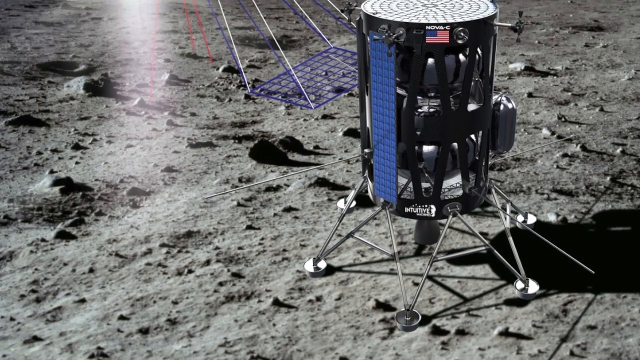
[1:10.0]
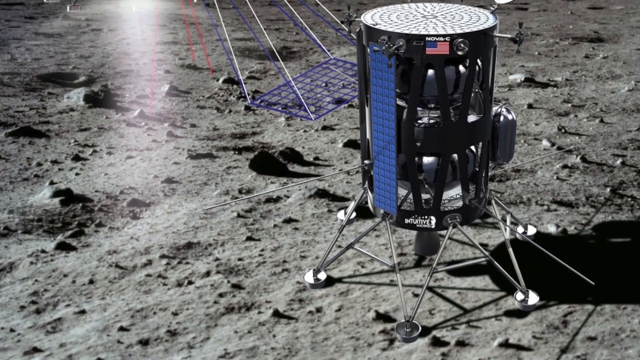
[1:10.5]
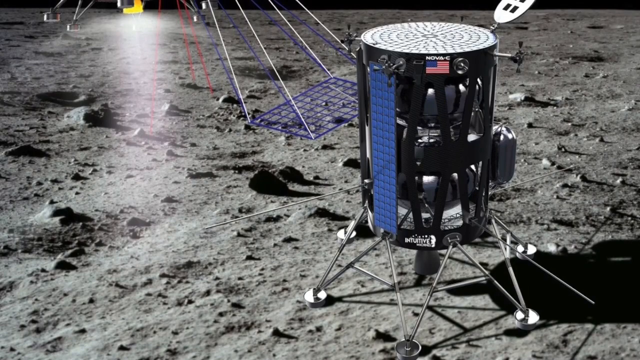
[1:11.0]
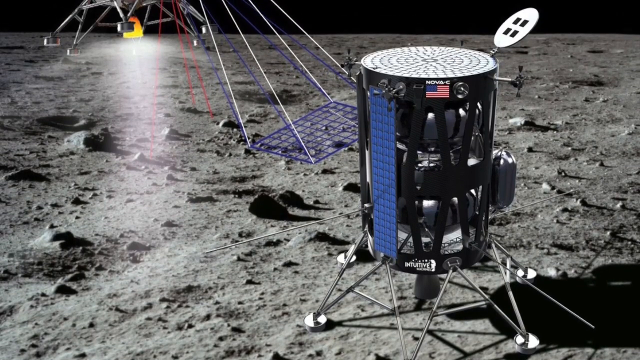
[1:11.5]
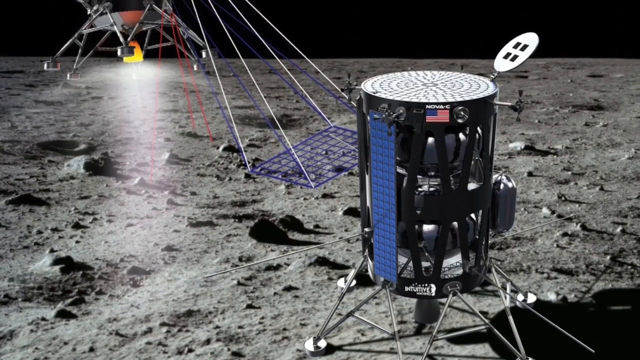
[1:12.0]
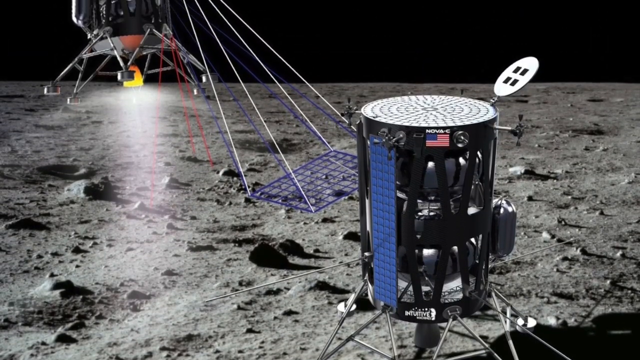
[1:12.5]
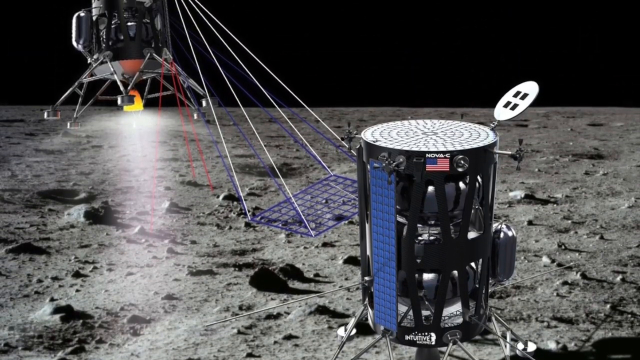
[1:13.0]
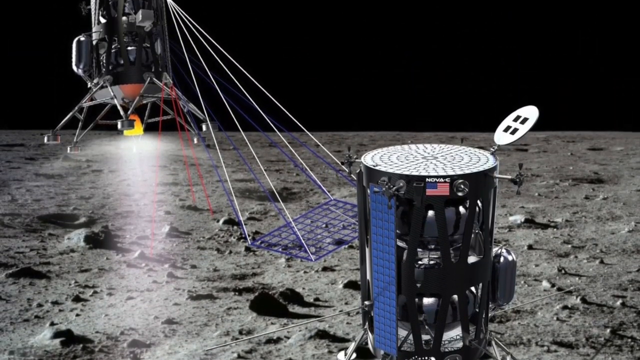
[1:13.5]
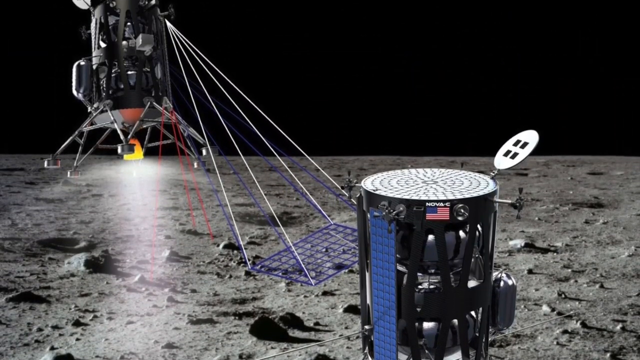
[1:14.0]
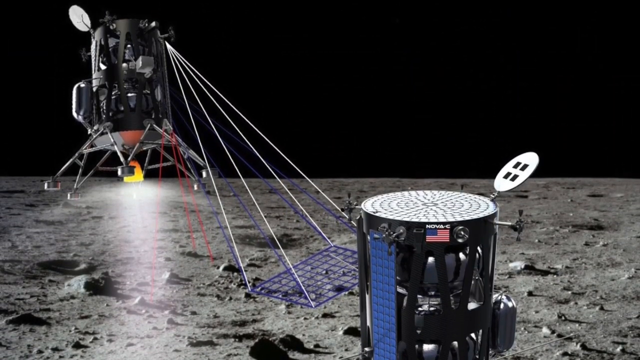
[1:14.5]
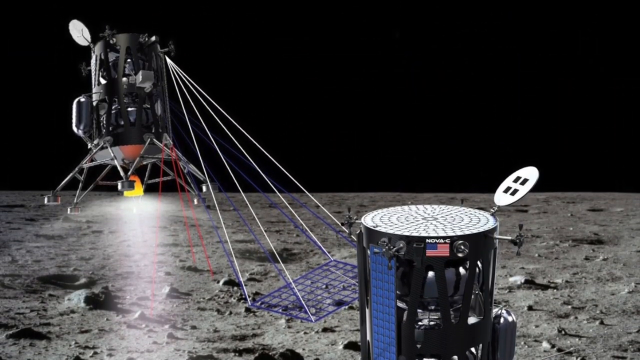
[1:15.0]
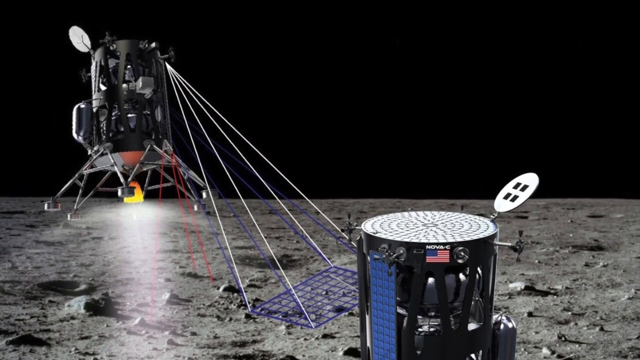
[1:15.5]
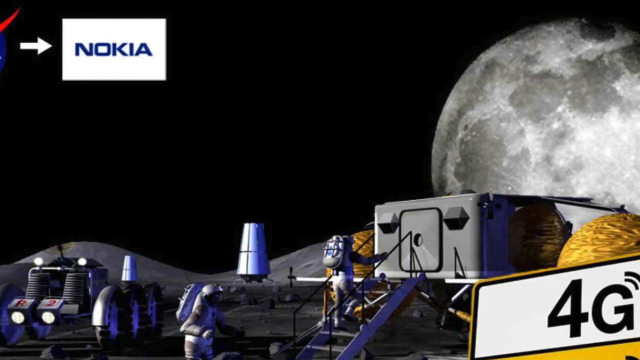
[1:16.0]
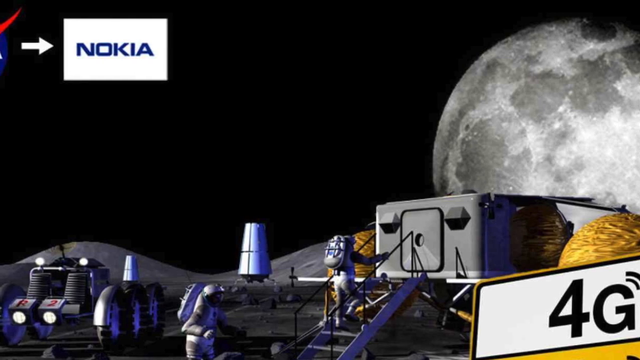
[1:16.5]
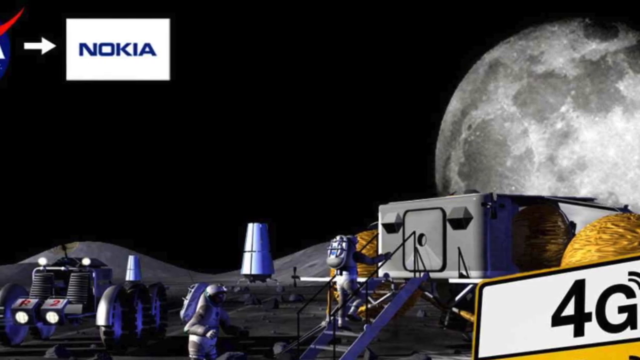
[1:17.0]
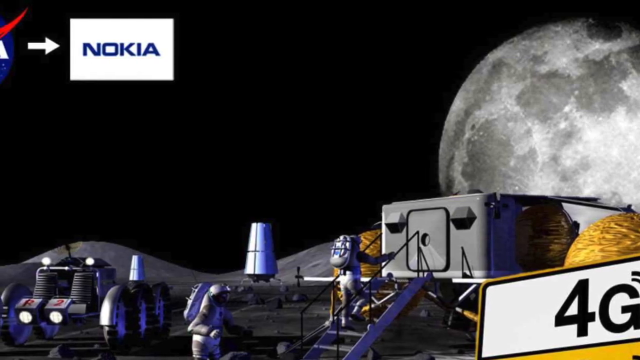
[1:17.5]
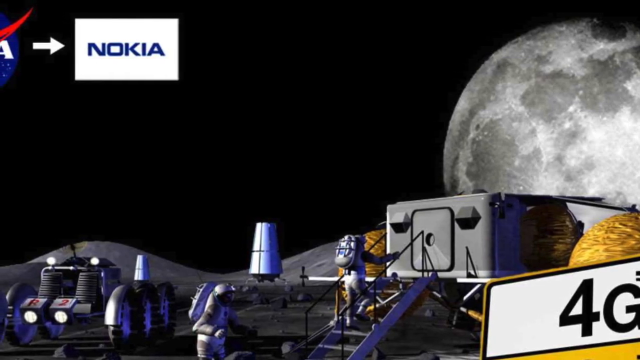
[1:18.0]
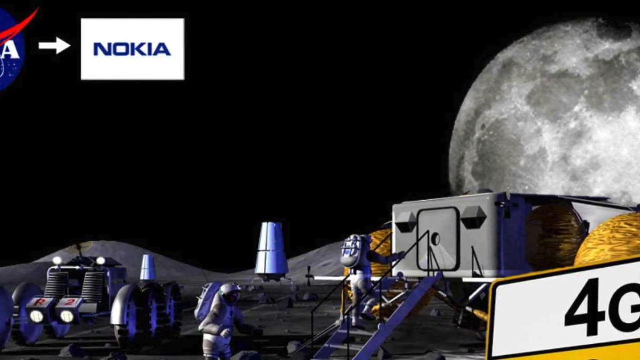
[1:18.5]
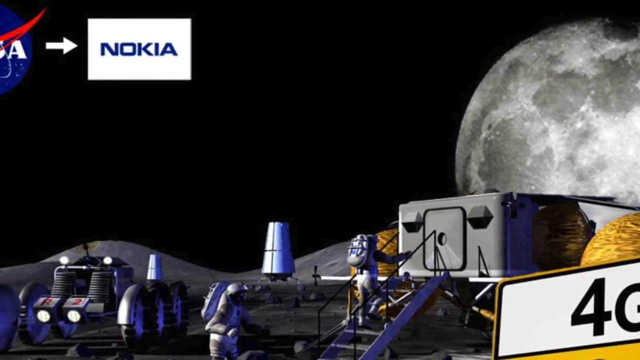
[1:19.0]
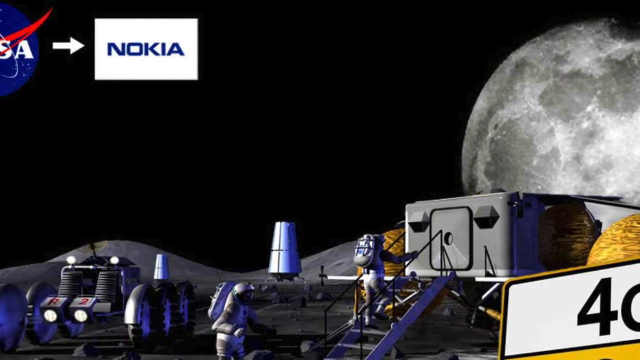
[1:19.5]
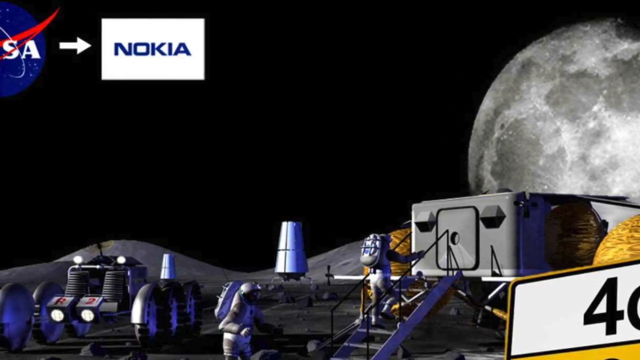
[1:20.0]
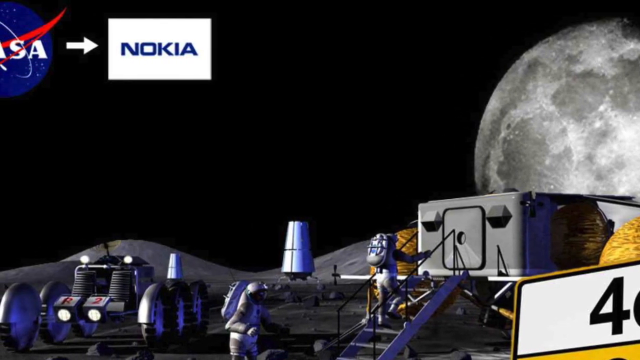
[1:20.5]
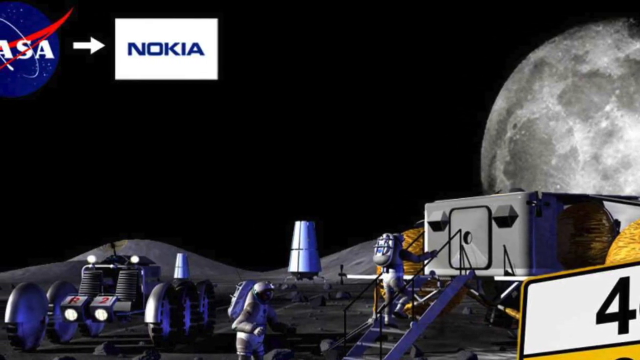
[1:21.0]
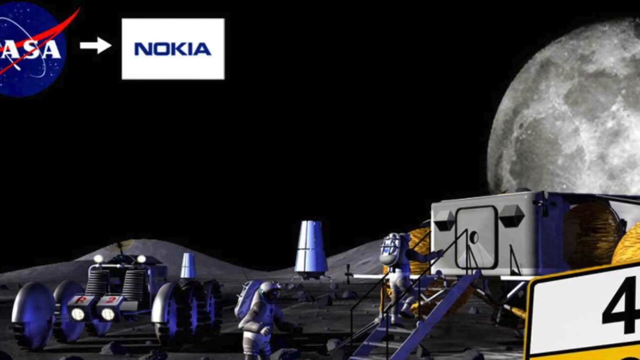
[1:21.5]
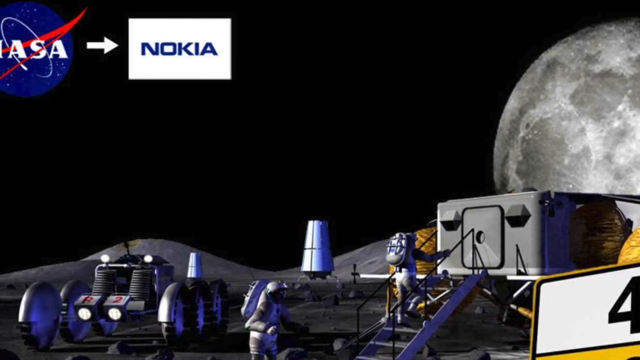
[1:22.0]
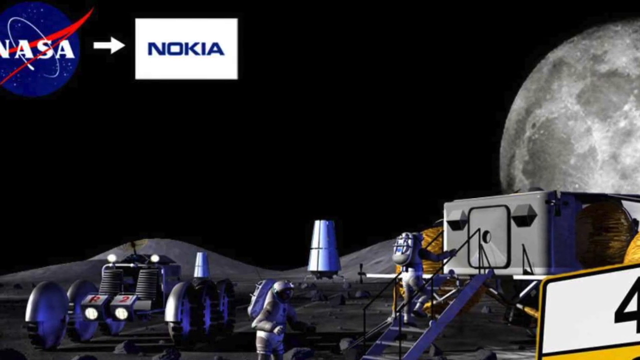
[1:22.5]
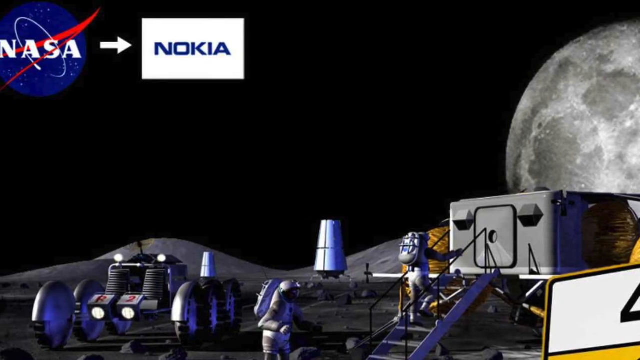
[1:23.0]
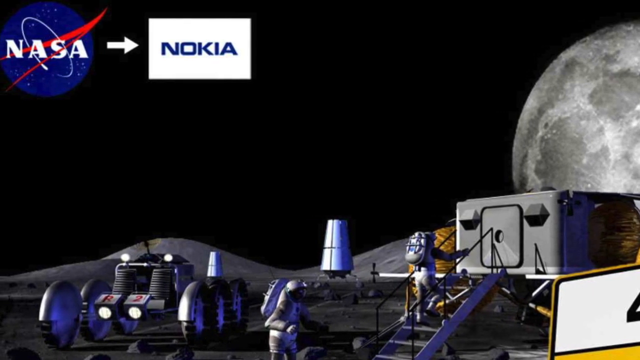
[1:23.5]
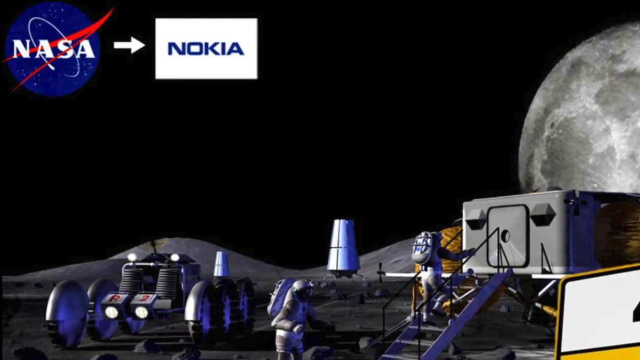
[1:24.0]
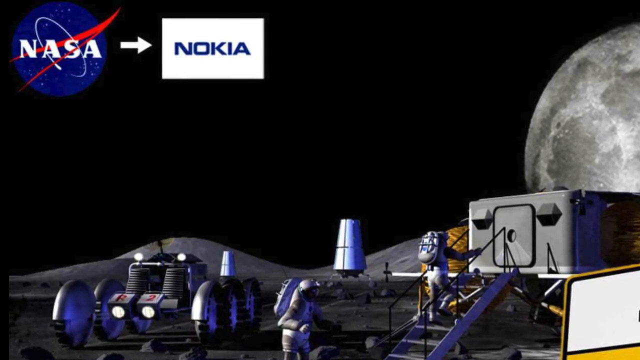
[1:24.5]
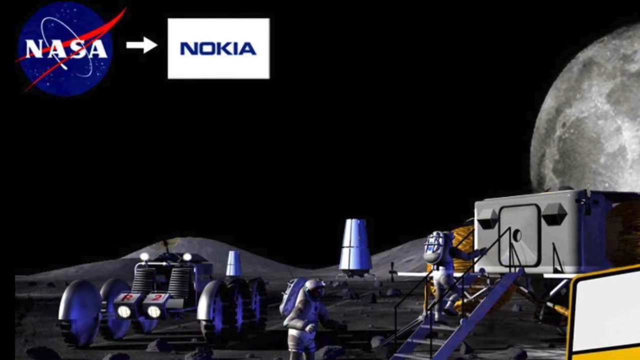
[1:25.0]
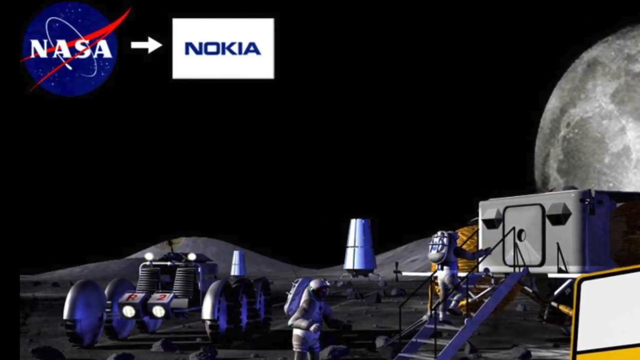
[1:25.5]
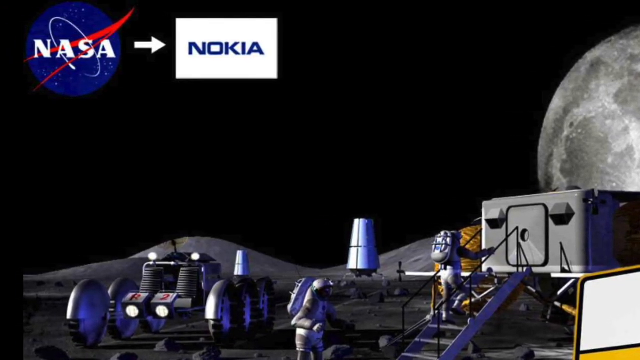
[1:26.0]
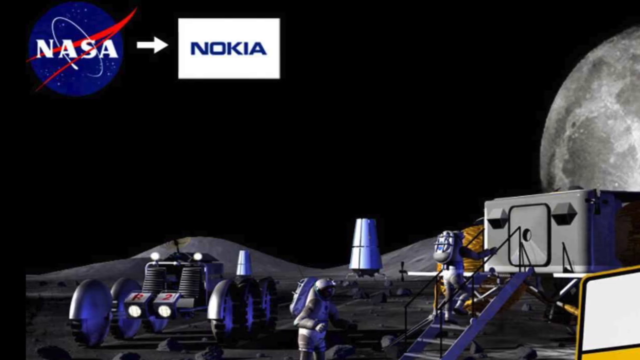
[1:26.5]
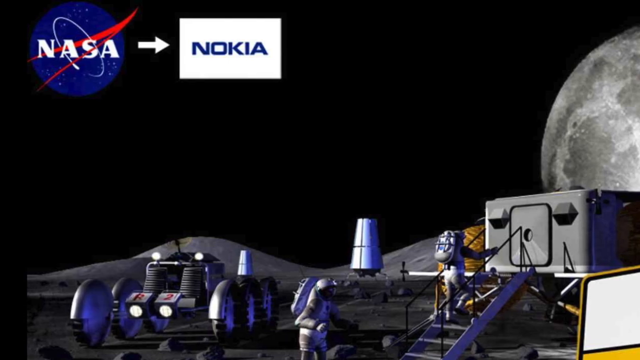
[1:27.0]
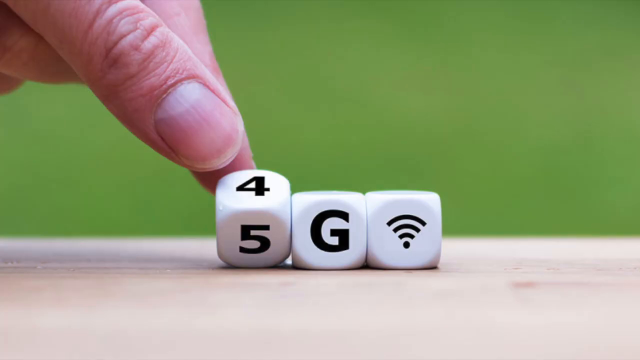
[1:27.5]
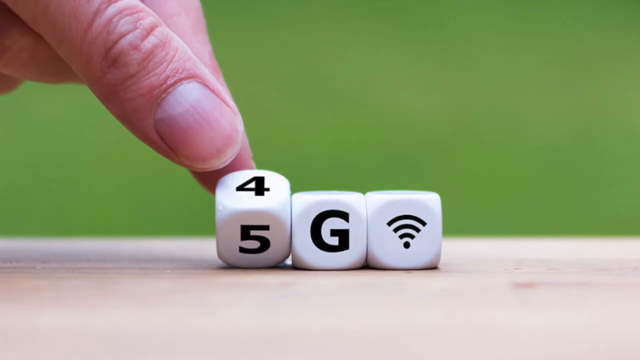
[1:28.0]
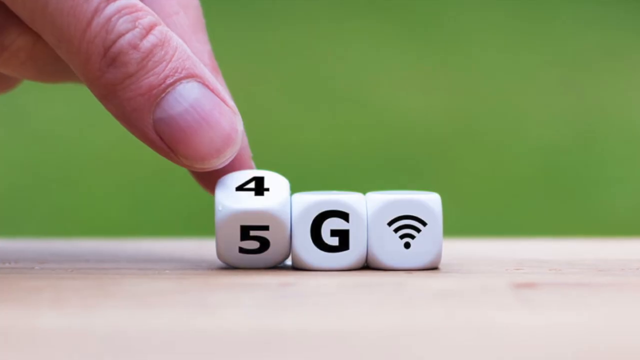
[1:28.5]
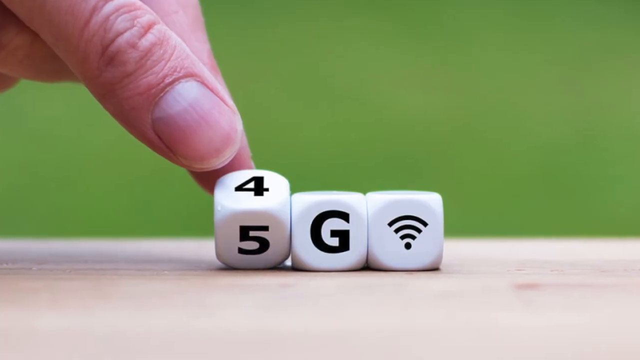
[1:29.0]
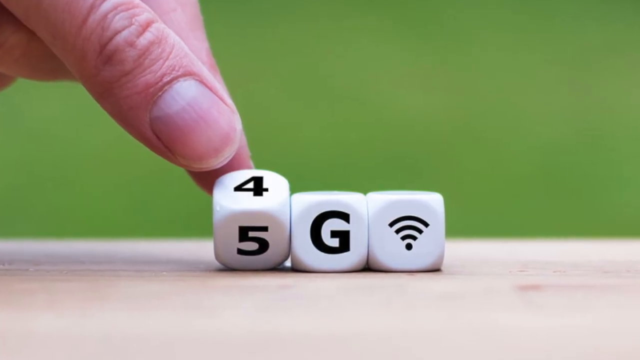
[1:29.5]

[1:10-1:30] An image shows some sort of receiver or transmitter on the surface of the moon. It is cylinder-shaped with five or six legs at the bottom, a United States flag on the front, the text "Nova-C", and at the very bottom the word "intuitive". The moon's surface is visible, with some light coming down from the top and some sort of blue grid at the top as well. The camera pans up to show another device of the same kind on the left side, flying; it seems to have lines attached to it, white and blue lines coming down from its top and ending in a gridded net pattern at the bottom. The scene then changes to a bunch of motorized machines or some kind of vehicles, with an image of the moon at the bottom on the right side and outer space in the back. The upper left corner shows "NASA" with the NASA logo, then an arrow pointing to the right and a white rectangle with "Nokia" inside it. Astronauts and other people wearing spacesuits are at the bottom of the scene. Next, a thumb and a finger touch some dice: one die shows a four and a five, the die next to it has a "G", and another die to the right of that has a network signal symbol. The camera zooms in slowly.